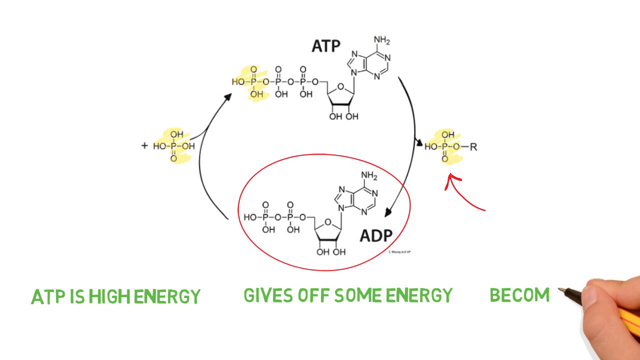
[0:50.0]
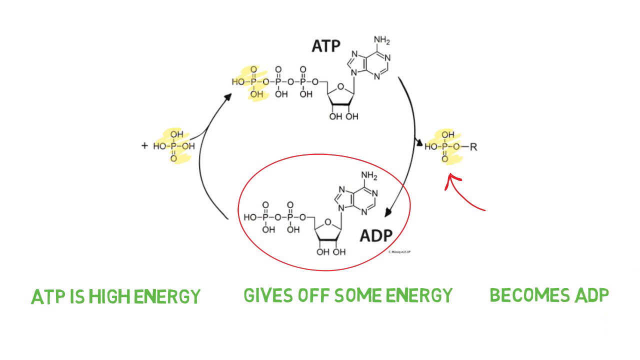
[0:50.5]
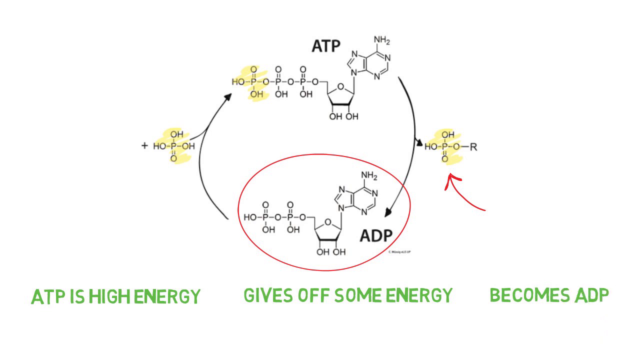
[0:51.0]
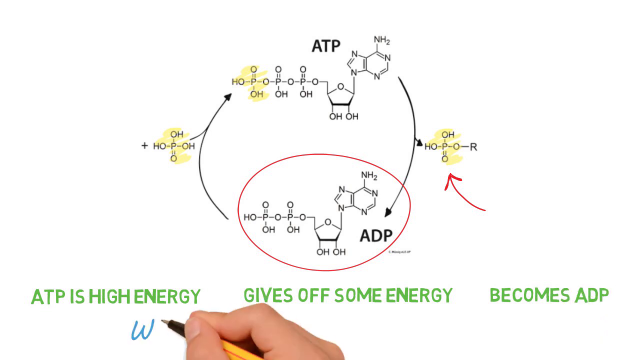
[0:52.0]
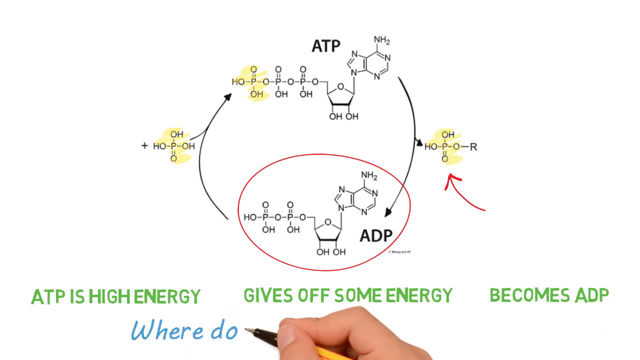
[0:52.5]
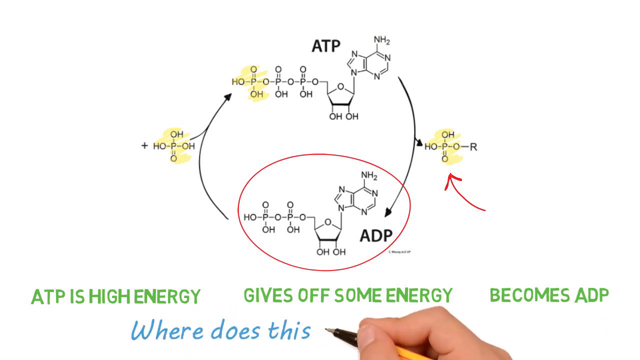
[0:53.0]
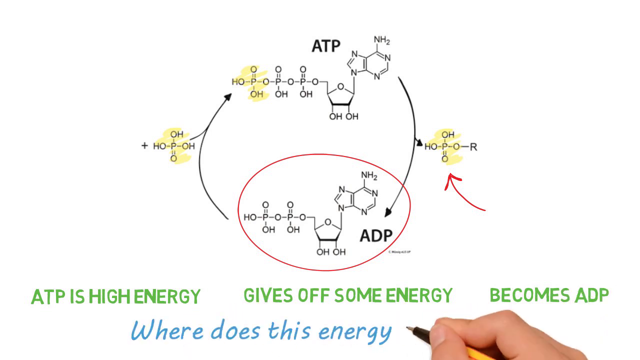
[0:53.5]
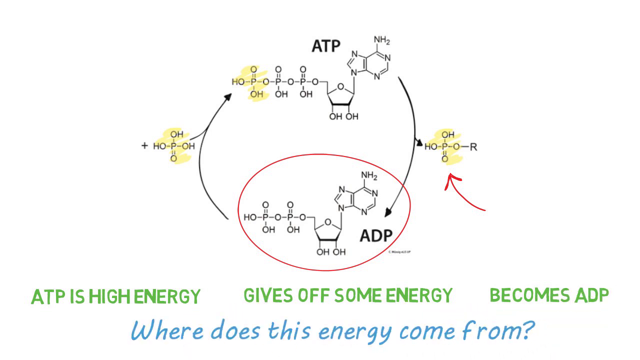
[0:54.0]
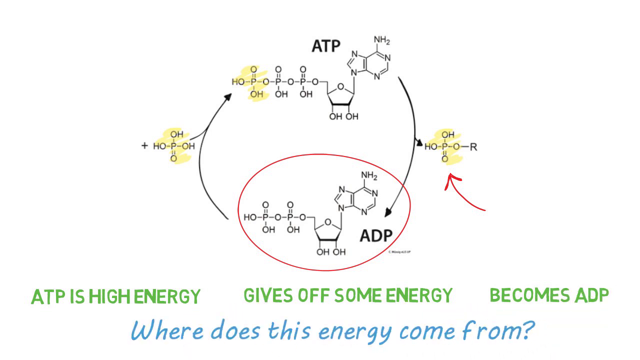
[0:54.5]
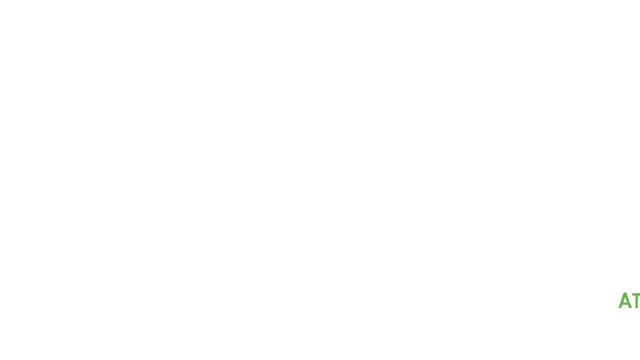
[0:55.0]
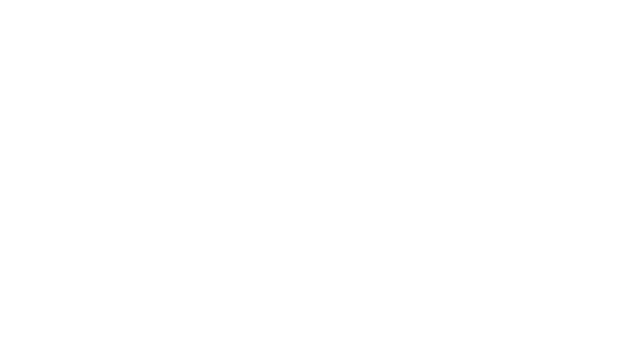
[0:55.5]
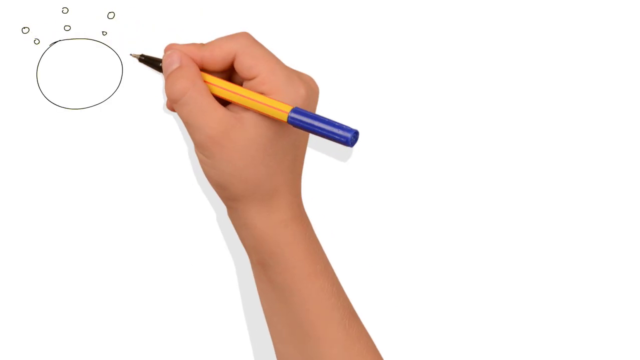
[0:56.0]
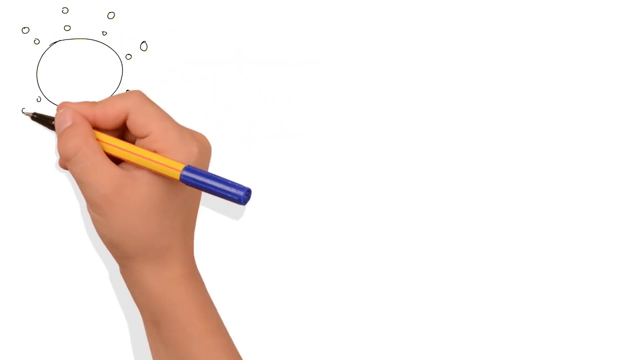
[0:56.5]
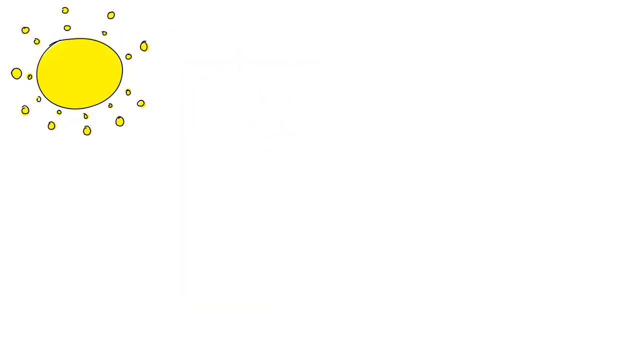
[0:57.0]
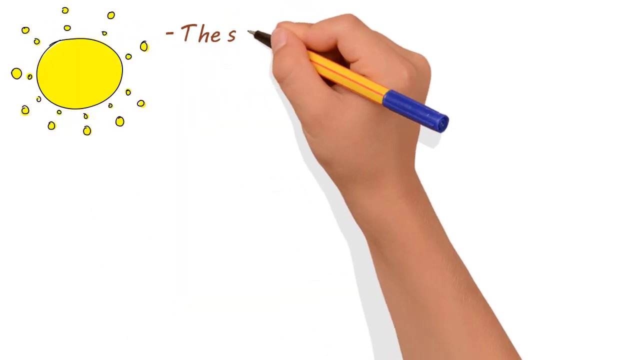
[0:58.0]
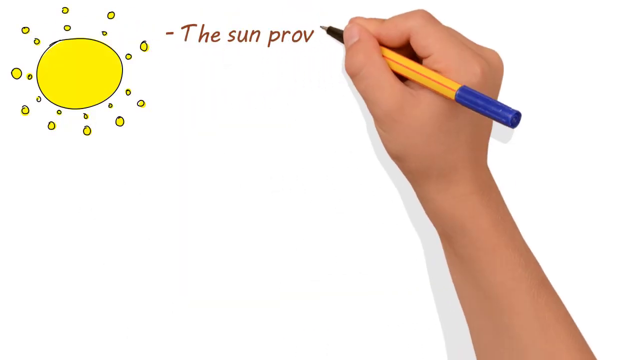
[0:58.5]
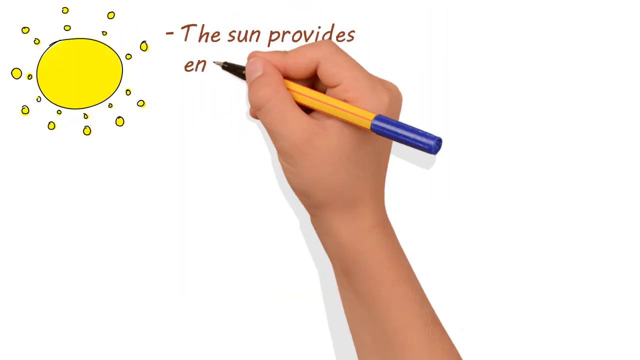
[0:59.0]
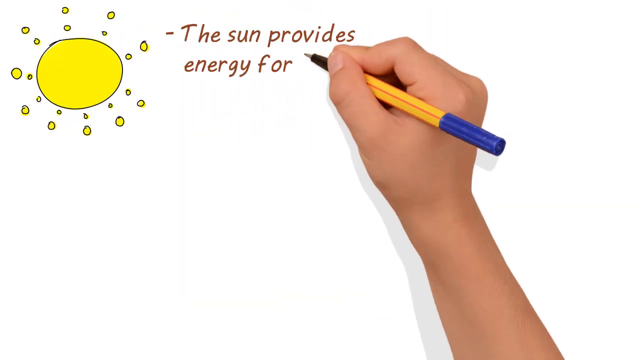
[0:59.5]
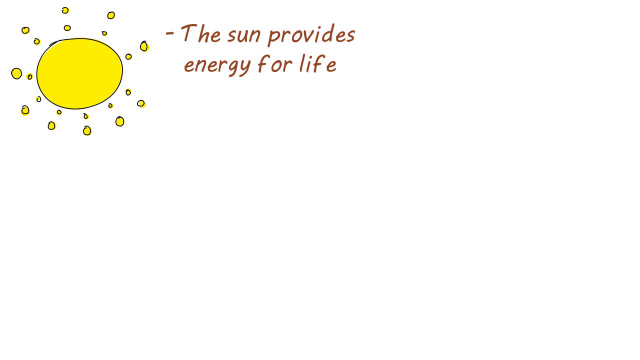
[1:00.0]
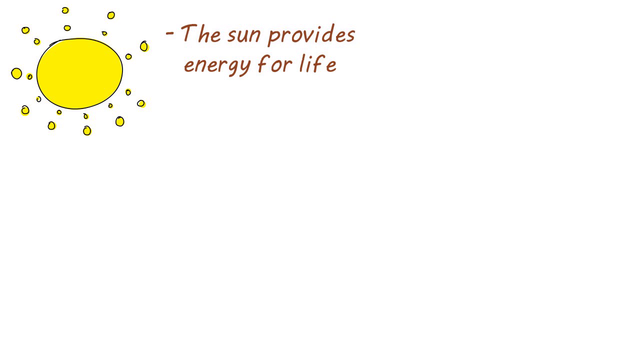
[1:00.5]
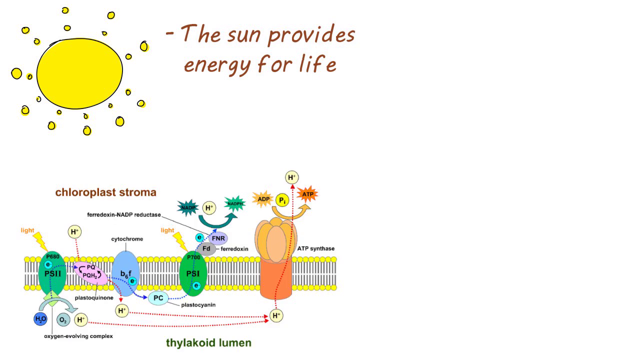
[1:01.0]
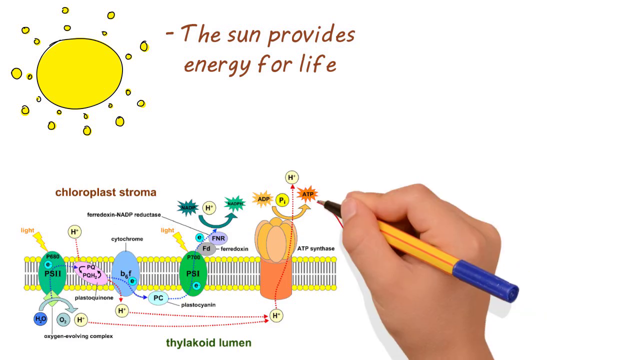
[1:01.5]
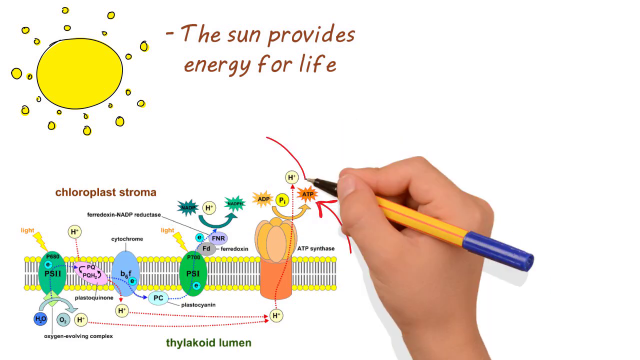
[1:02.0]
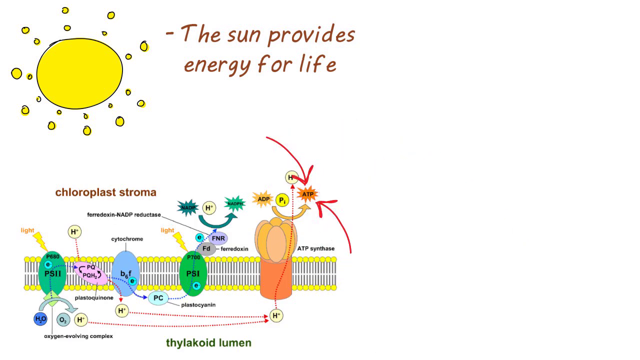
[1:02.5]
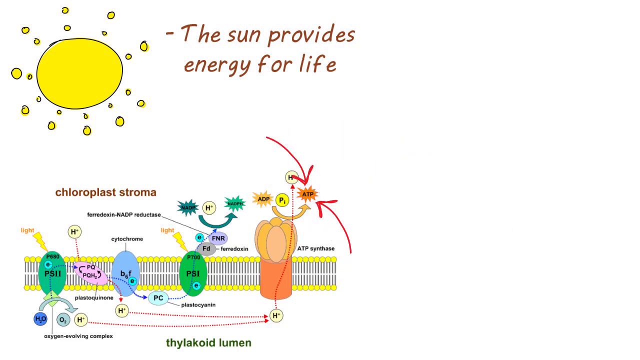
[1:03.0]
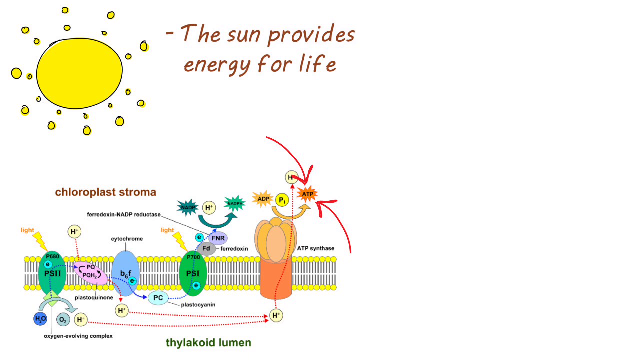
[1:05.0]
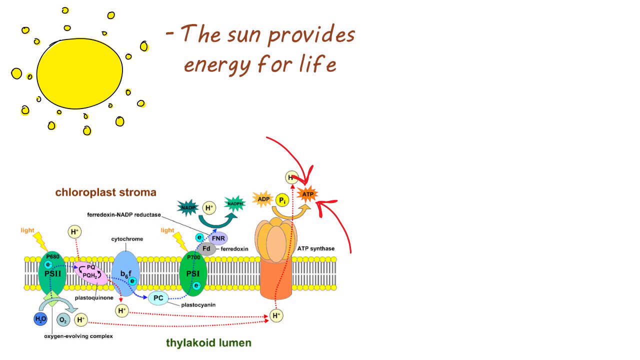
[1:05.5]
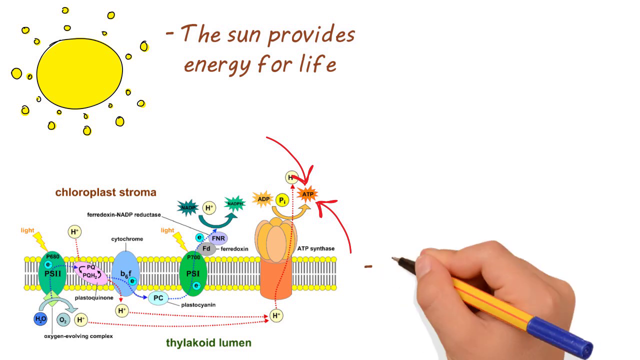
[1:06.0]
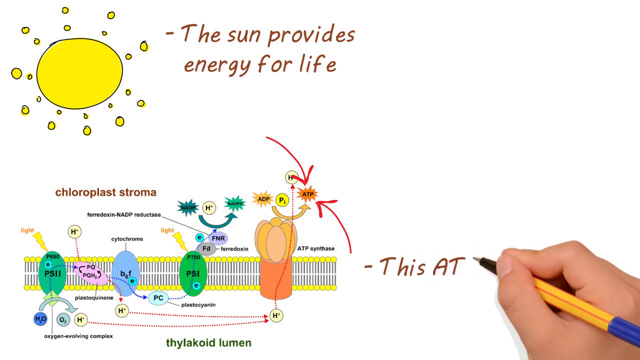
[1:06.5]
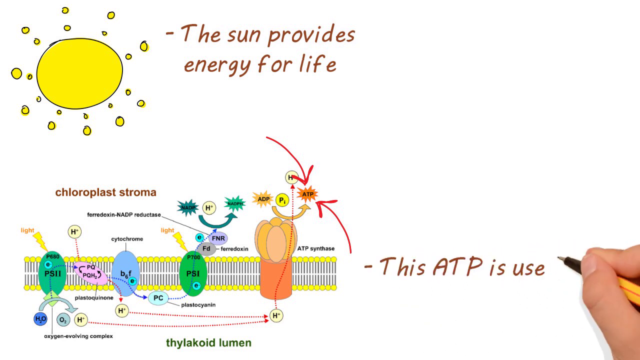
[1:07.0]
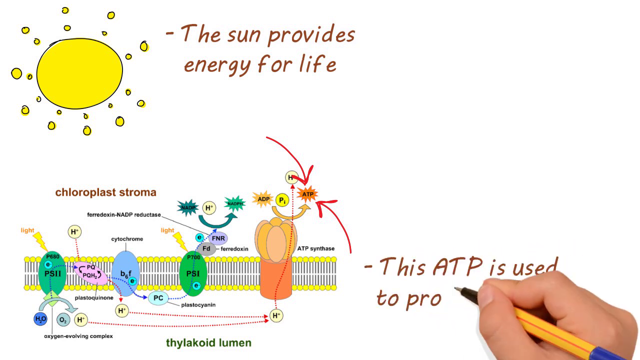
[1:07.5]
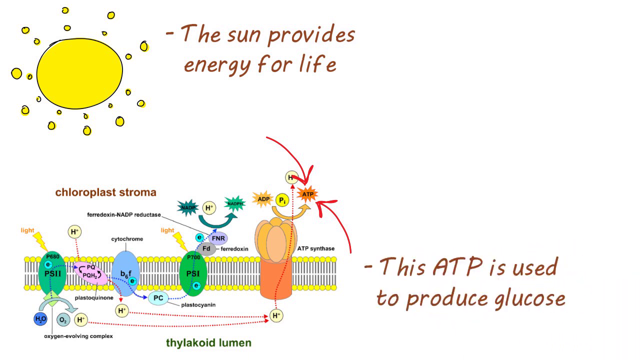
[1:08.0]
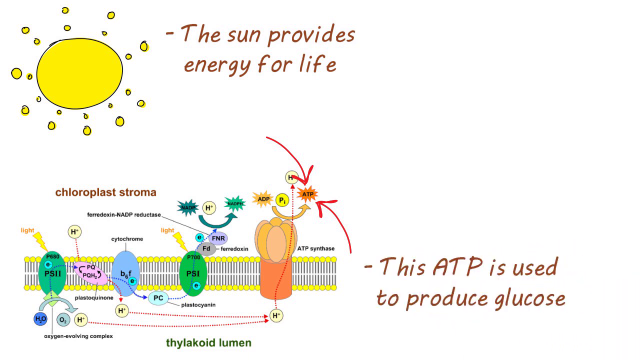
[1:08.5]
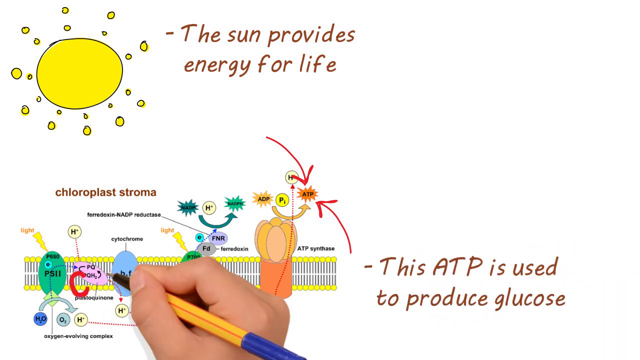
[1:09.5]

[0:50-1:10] Drawings of cells are on the whiteboard, with the ATP at the top and the ADP at the bottom. Over to the right, an arrow points to a cell. The cells are outlined with circular arrows going in a clockwise motion around them. At the bottom of the screen, someone writes "ATP is high energy, gives off some energy, becomes ADP." The final words at the bottom of the screen say "where does this energy come from?" The video then transitions to another scene, where a sun is drawn in the upper left corner of the screen. The text next to it says "the sun provides energy for life," along with a reference to chloroplast stroma. A number of different cells are drawn at the bottom of the page, apparently depicting the thylakoid lumen. The final text says "this ATP is used to produce glucose."